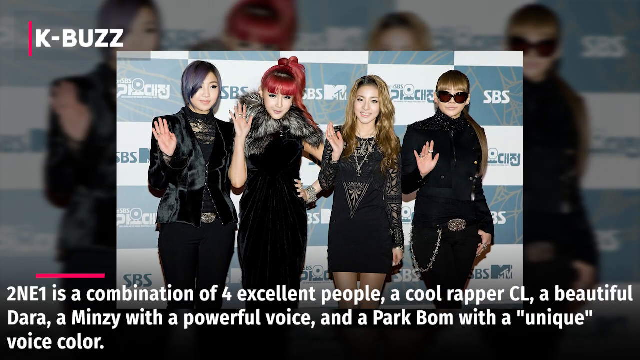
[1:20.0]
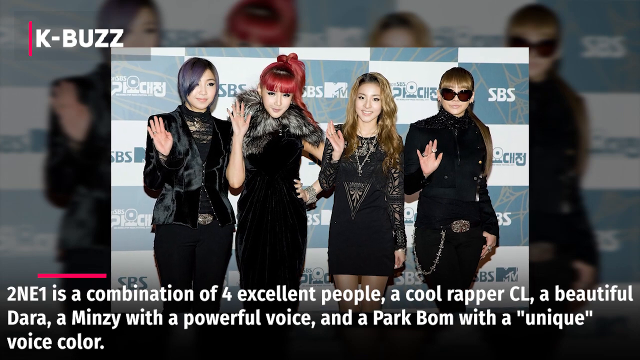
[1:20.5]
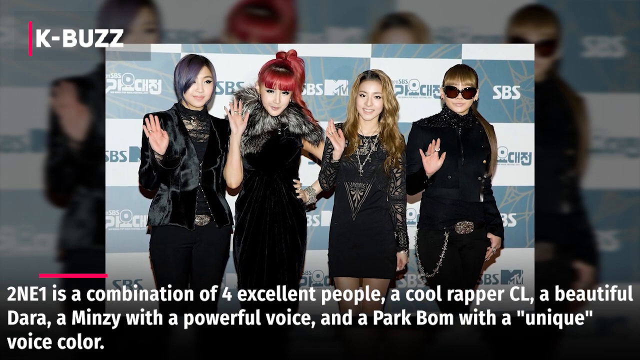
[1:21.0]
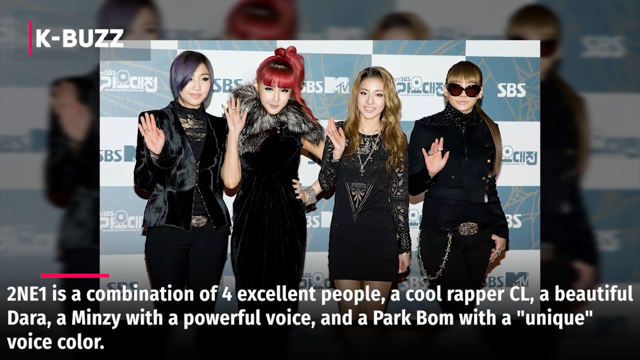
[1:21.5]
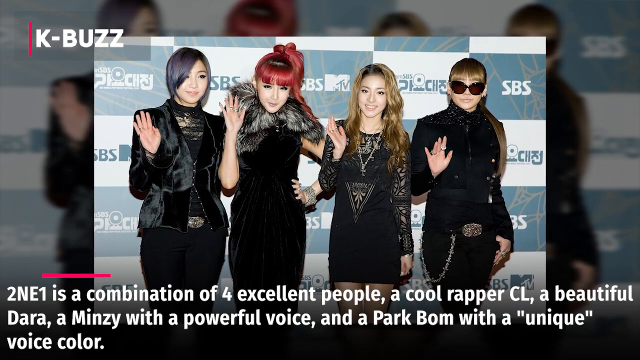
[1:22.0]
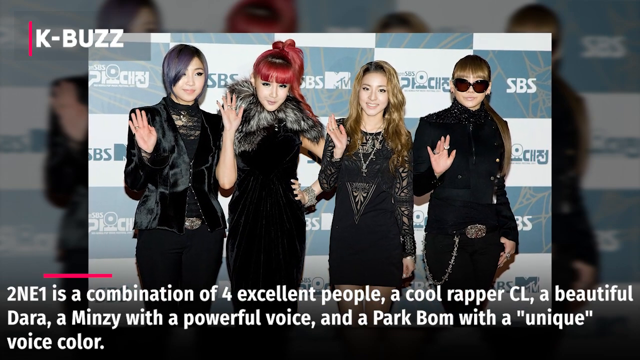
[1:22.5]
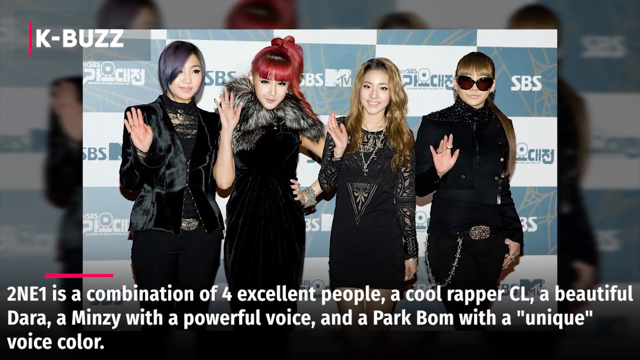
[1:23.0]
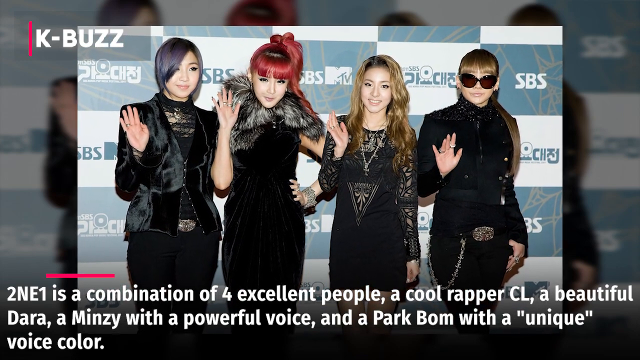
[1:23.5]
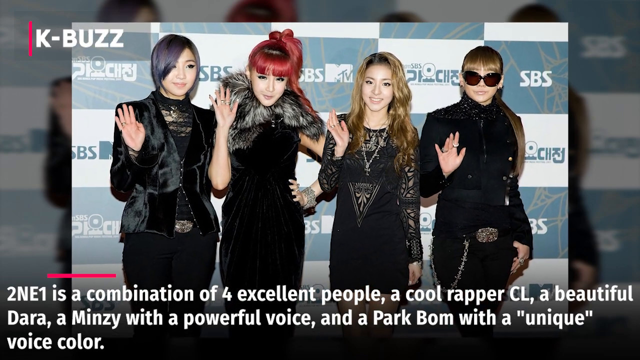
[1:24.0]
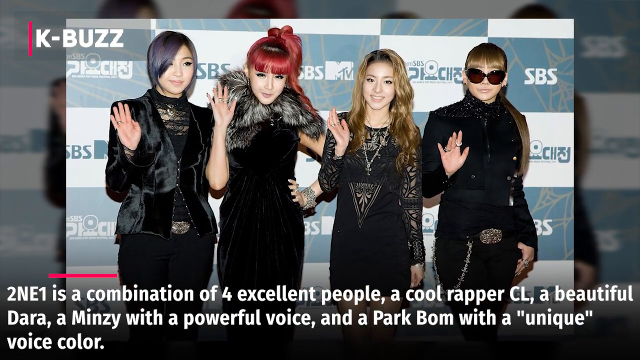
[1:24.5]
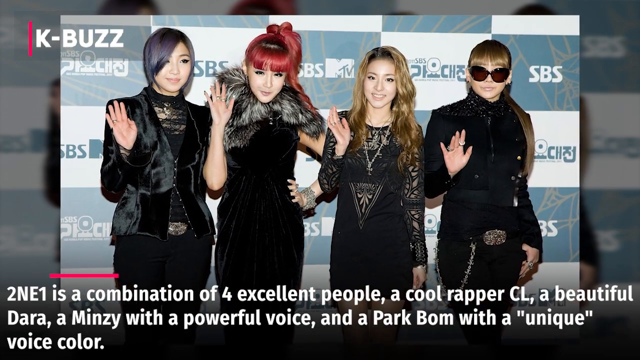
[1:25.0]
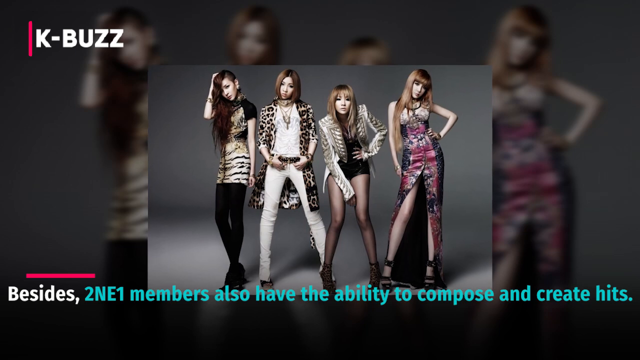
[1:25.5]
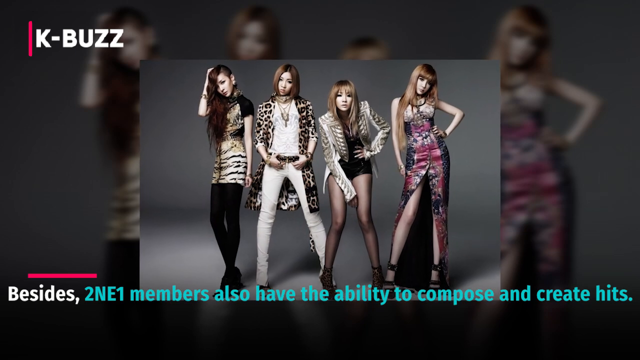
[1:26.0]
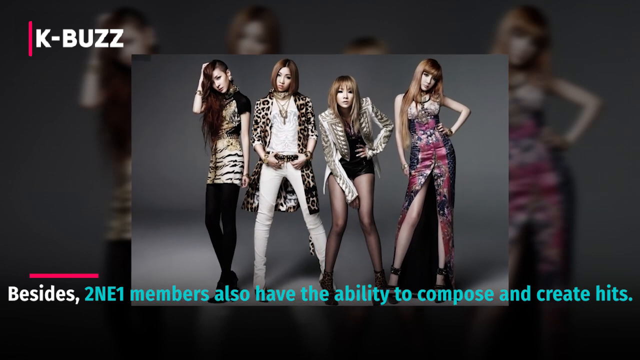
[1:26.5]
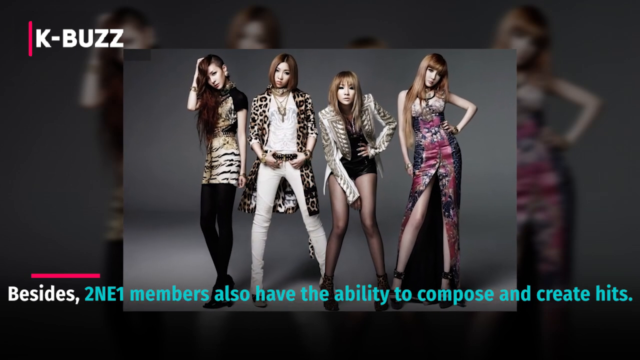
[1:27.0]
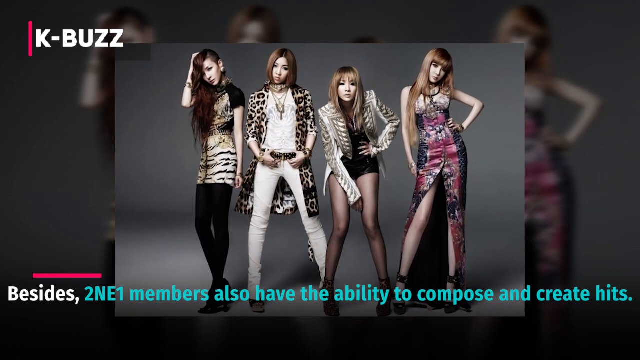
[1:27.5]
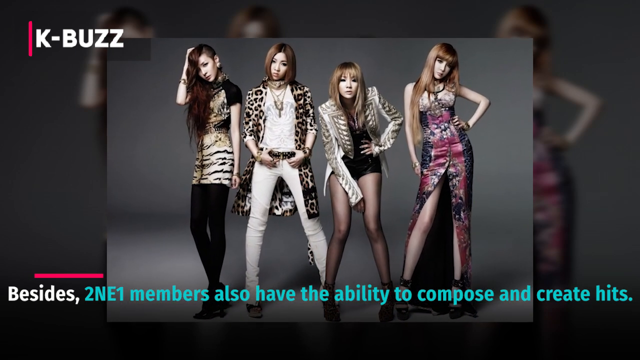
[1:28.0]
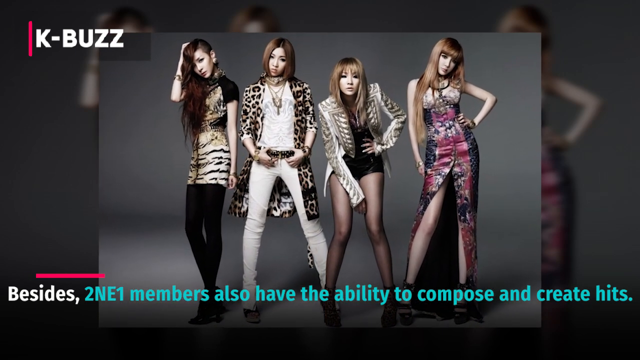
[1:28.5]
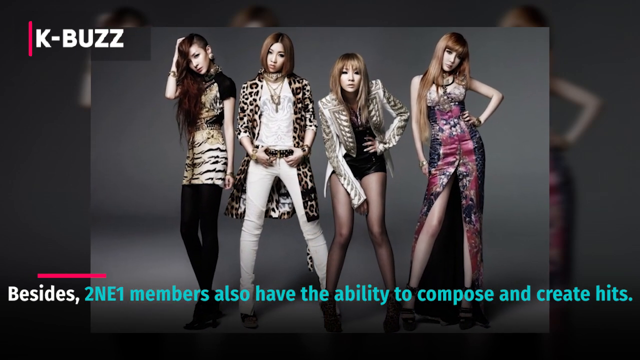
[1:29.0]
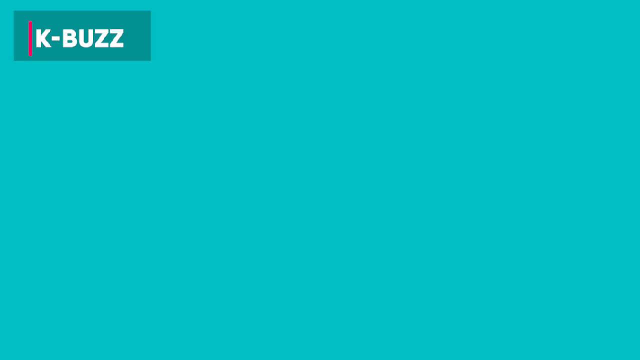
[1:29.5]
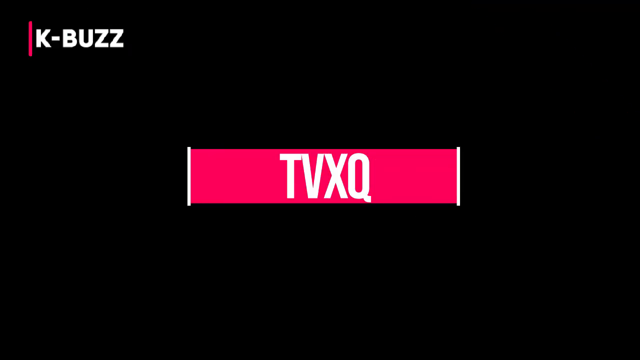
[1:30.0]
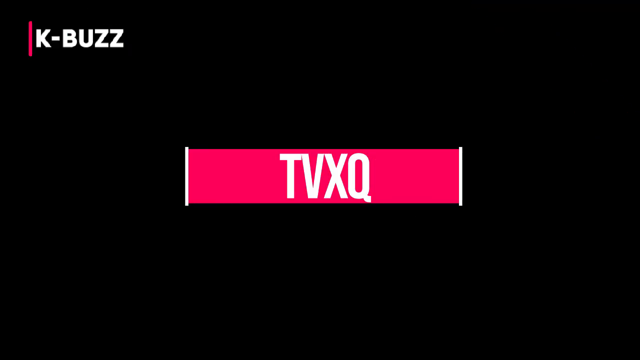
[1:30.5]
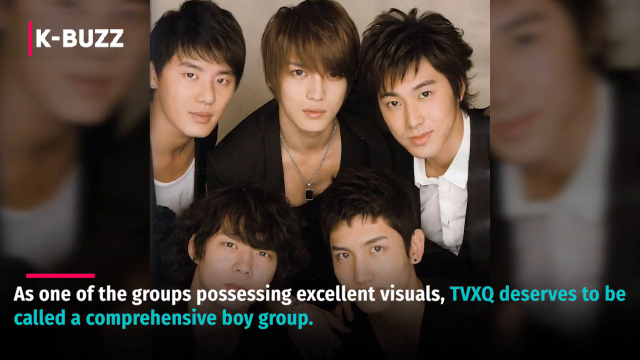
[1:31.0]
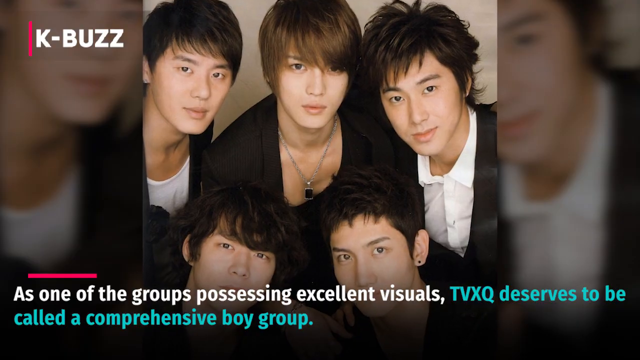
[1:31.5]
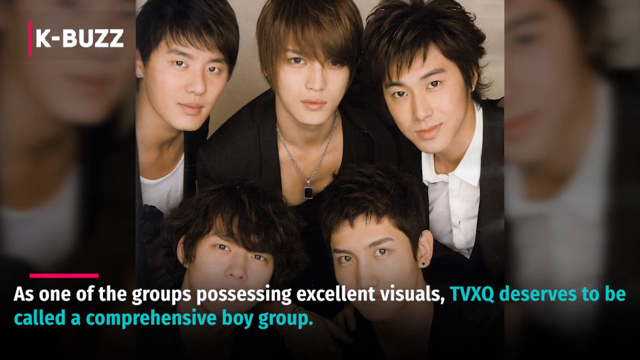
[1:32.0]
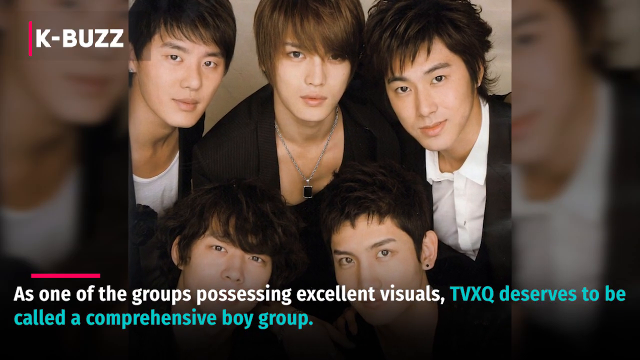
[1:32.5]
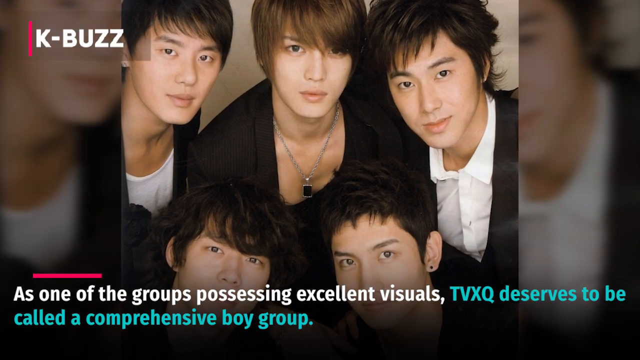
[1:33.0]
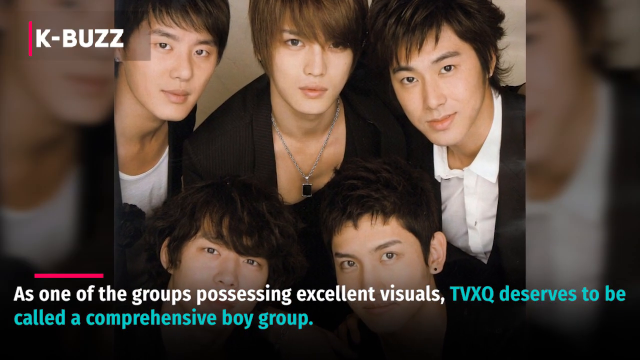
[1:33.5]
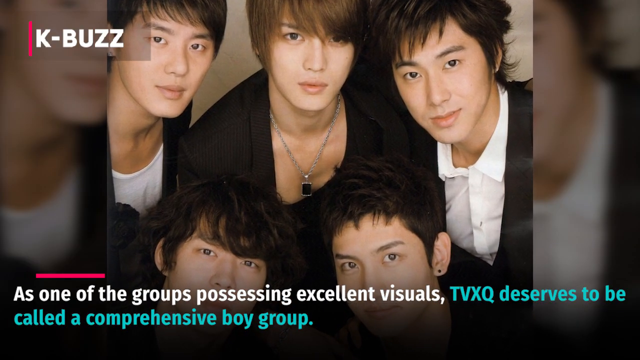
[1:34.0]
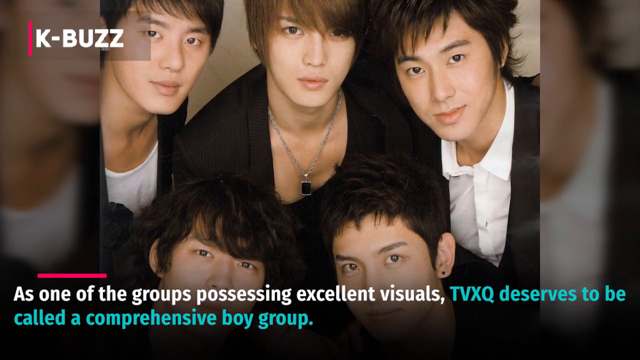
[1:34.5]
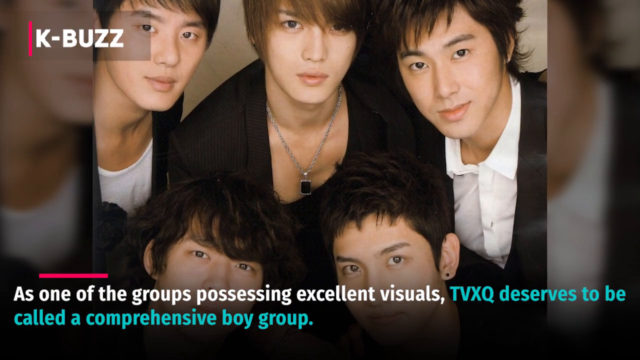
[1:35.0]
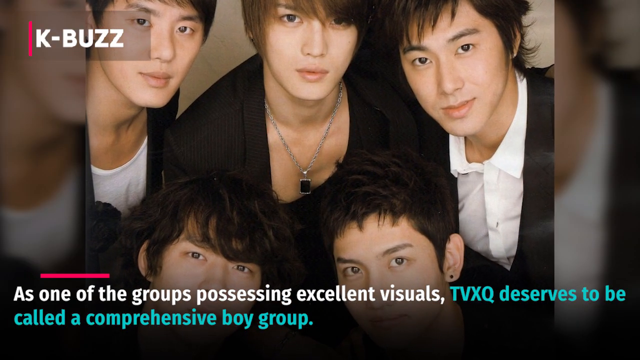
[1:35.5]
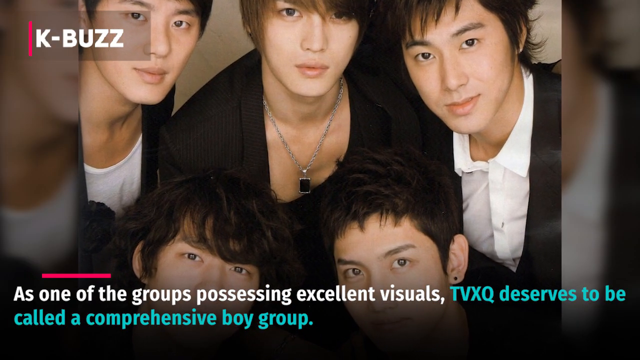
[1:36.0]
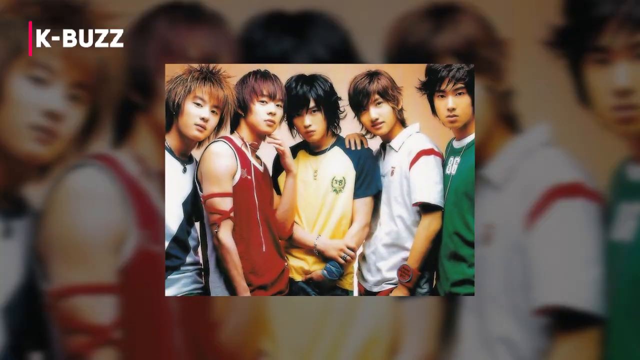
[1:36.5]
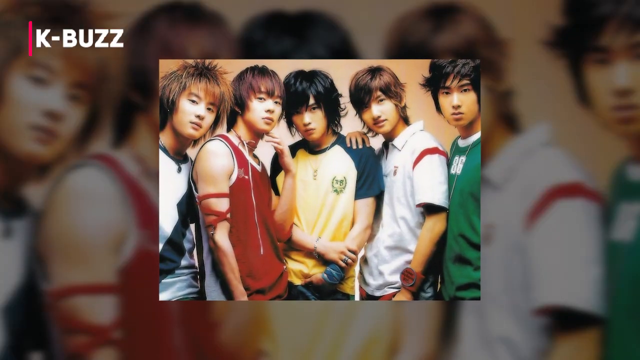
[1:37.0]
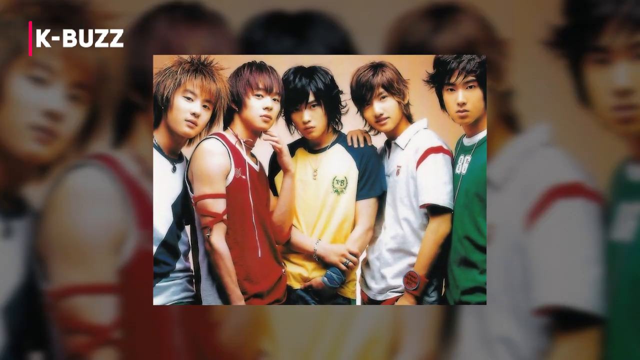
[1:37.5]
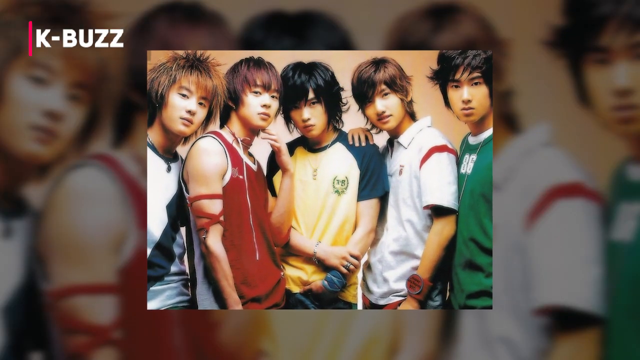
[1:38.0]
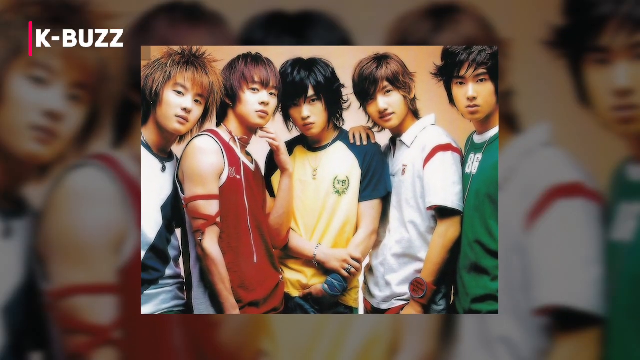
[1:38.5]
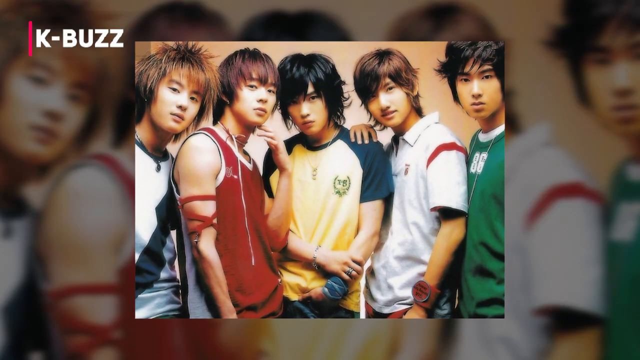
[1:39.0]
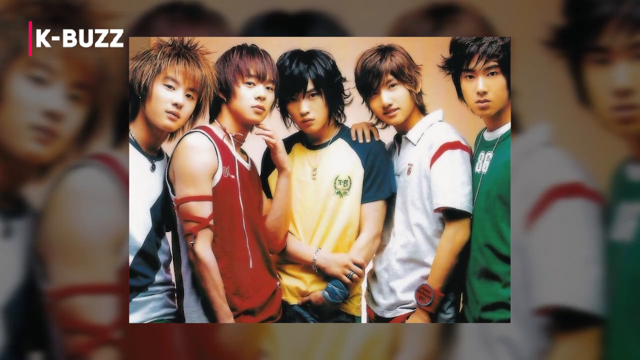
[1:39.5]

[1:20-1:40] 2NE1 is shown at an event in black outfits, each one waving with her right hand. Another picture of the four women follows, in which their hair color is a little more uniform; the one on the left has brown hair, and they are all standing in different poses. Below is the text "Besides, 2NE1 members also have the ability to compose and create hits." The green transition appears across the screen from bottom left to top right, and TVXQ is introduced with a red banner and white text. A picture shows five young men of the group TVXQ in black outfits; the two at the top left and right have white shirts, while the others are all in black or black blazers. Underneath is the text "as one of the groups possessing excellent visuals, TVXQ deserves to be called a comprehensive boy group." The section ends with an older picture of TVXQ in which they look much younger, with hair a little longer and a little spiked.